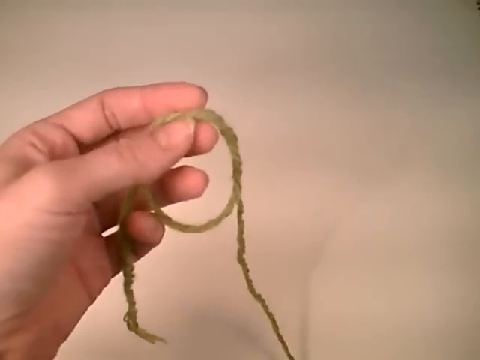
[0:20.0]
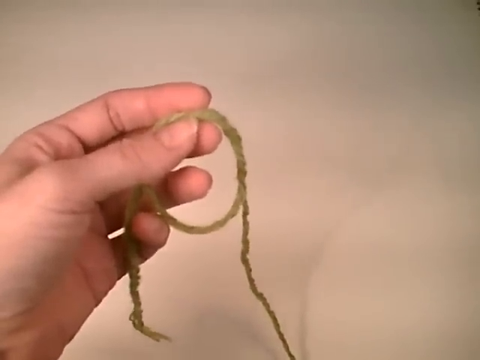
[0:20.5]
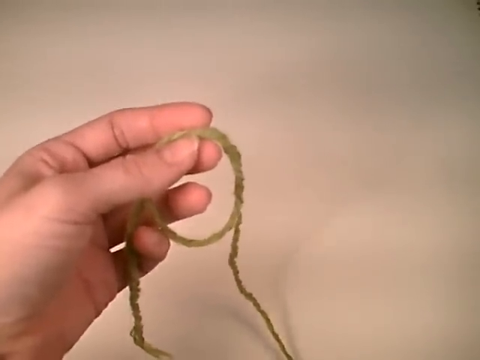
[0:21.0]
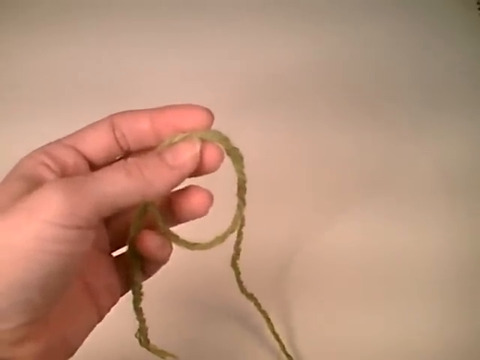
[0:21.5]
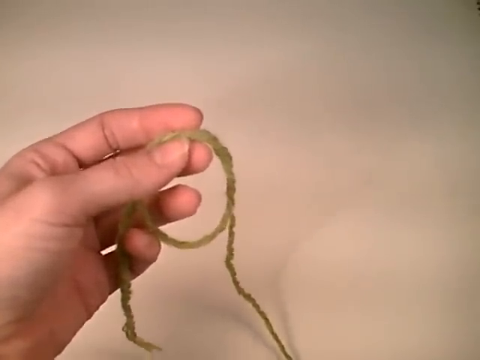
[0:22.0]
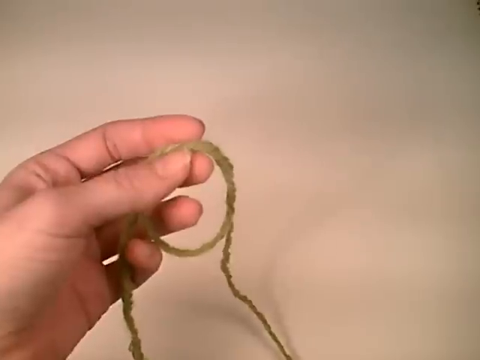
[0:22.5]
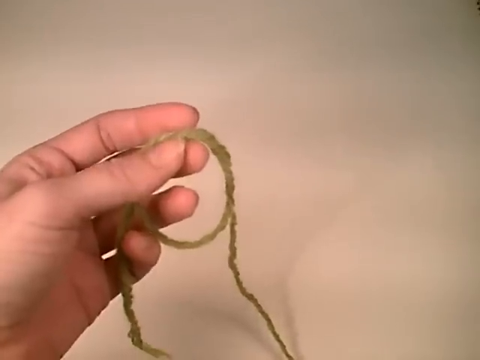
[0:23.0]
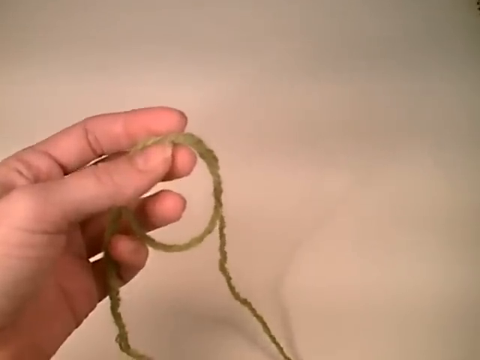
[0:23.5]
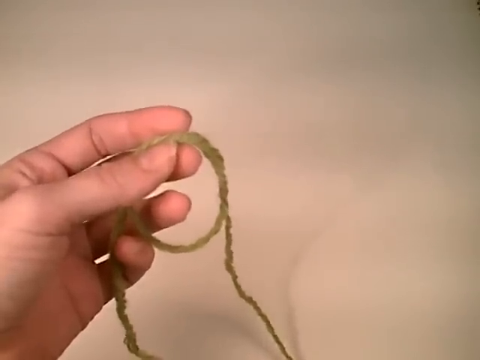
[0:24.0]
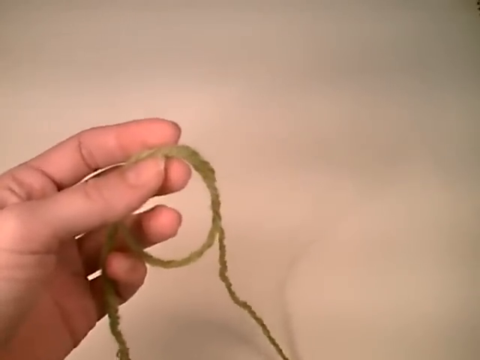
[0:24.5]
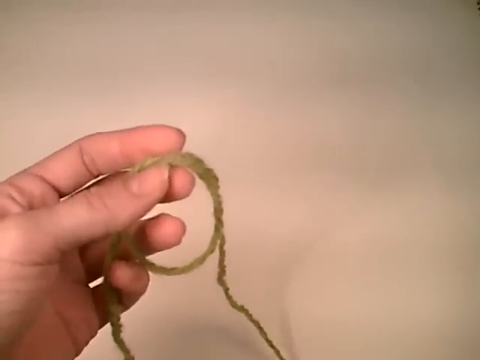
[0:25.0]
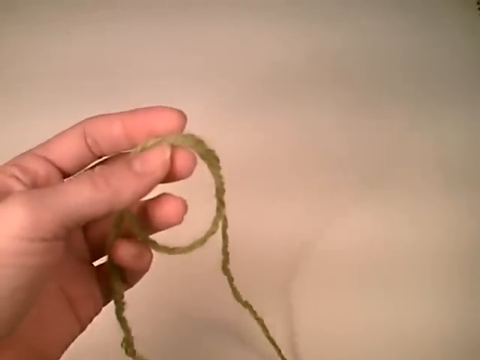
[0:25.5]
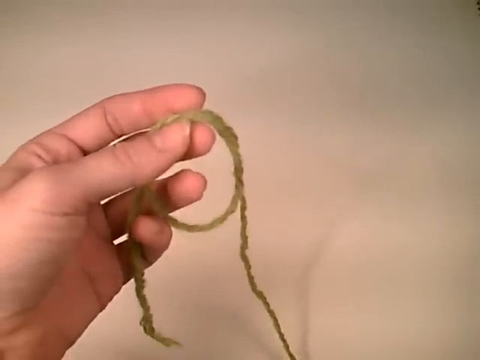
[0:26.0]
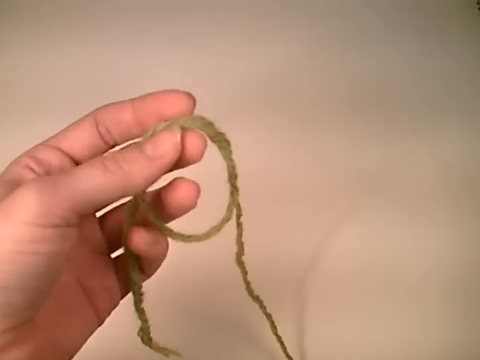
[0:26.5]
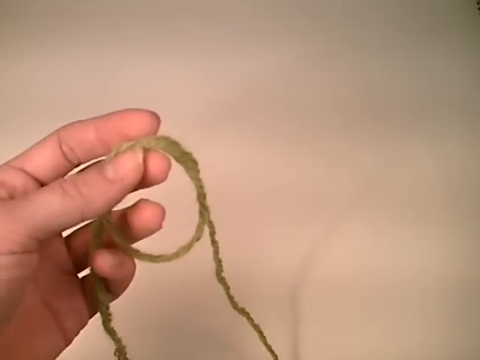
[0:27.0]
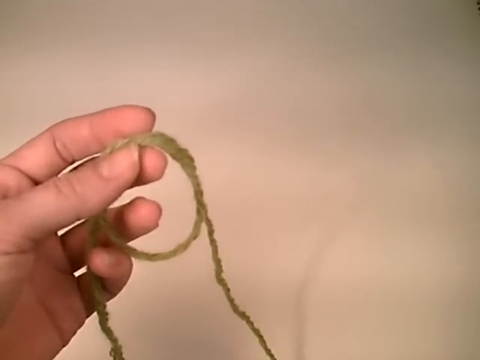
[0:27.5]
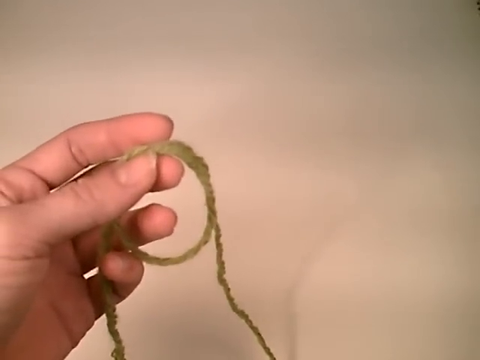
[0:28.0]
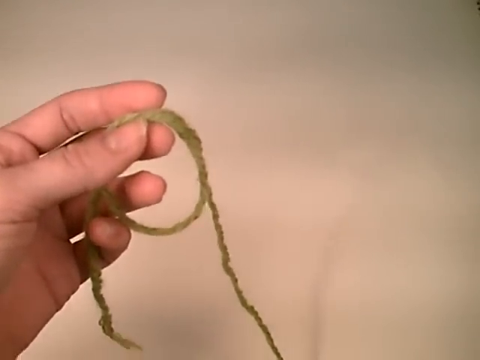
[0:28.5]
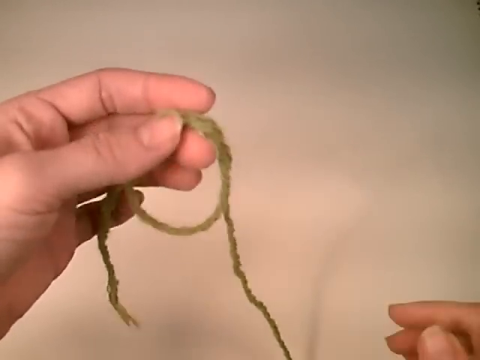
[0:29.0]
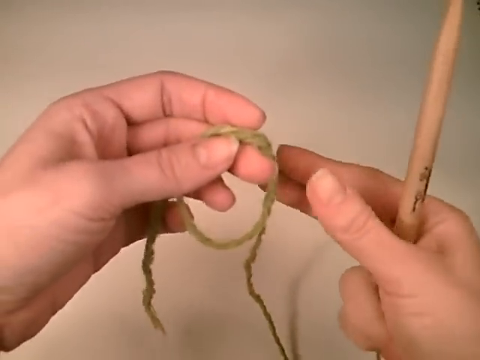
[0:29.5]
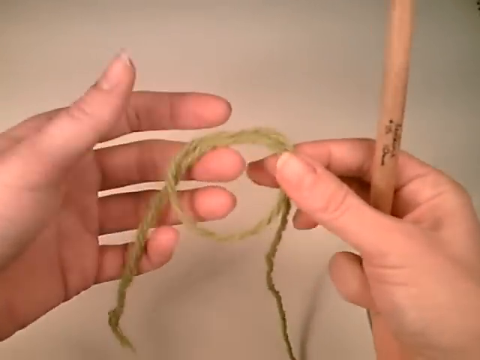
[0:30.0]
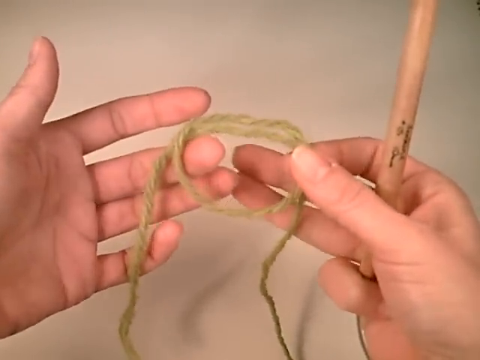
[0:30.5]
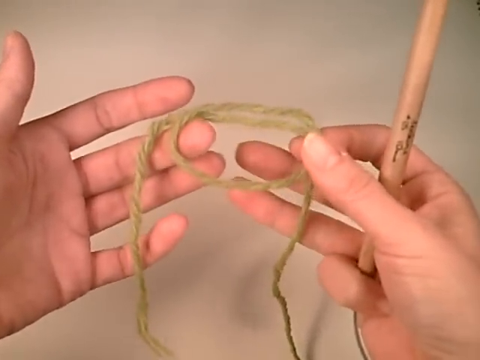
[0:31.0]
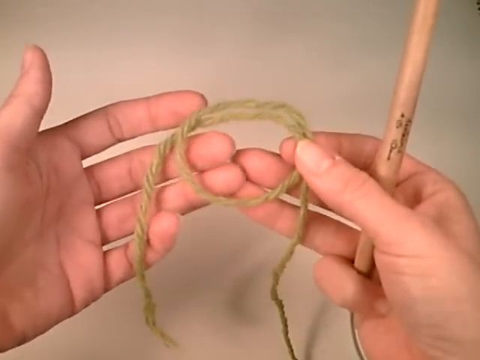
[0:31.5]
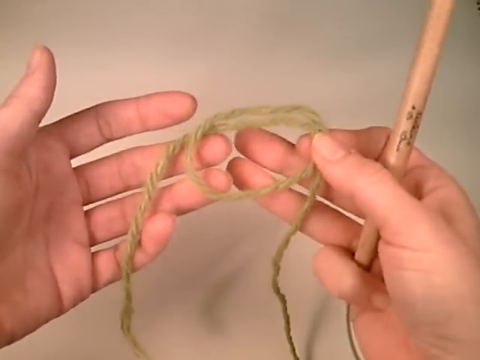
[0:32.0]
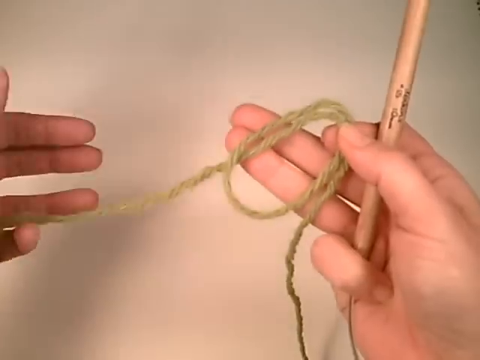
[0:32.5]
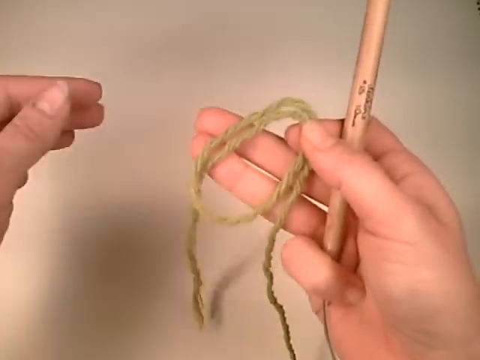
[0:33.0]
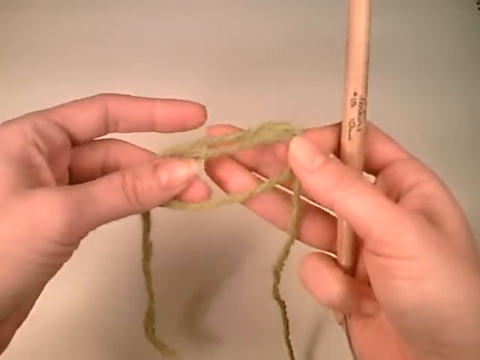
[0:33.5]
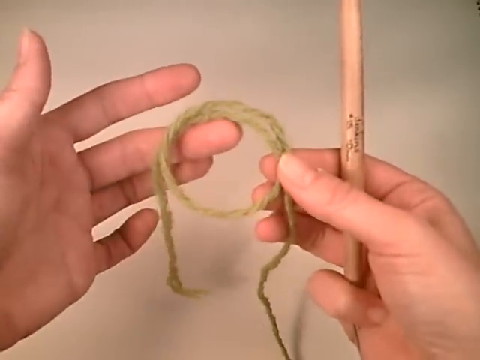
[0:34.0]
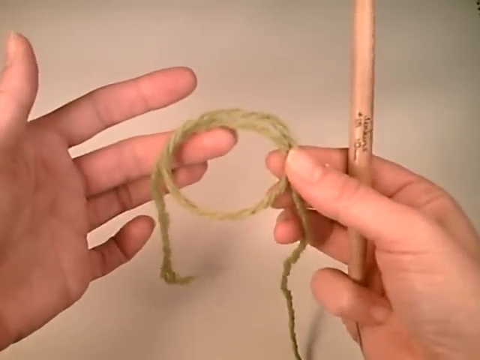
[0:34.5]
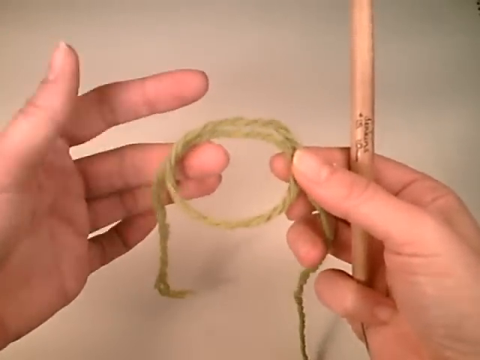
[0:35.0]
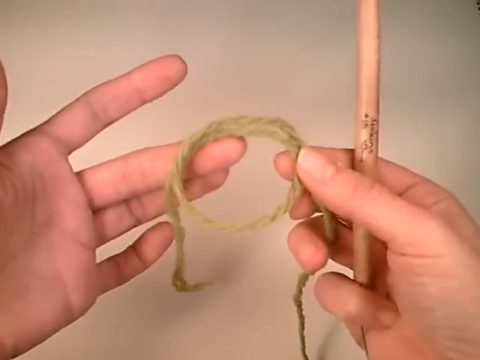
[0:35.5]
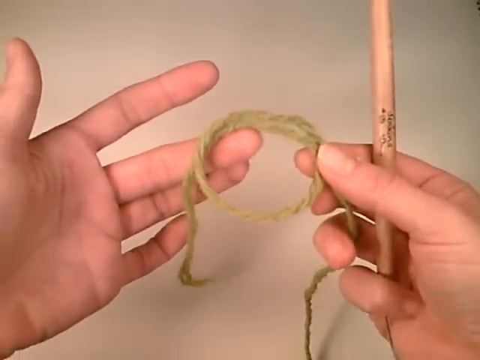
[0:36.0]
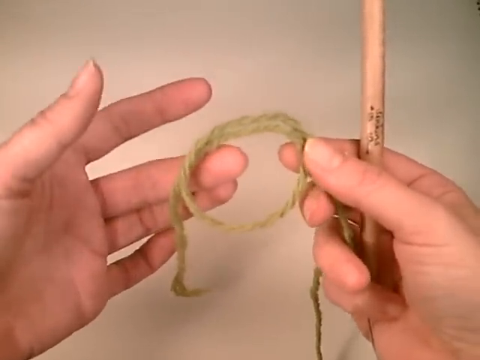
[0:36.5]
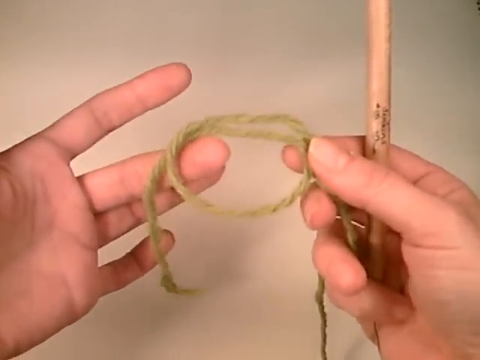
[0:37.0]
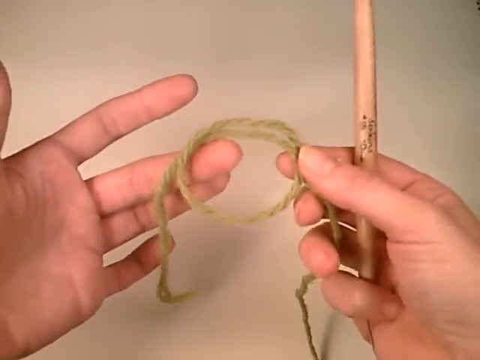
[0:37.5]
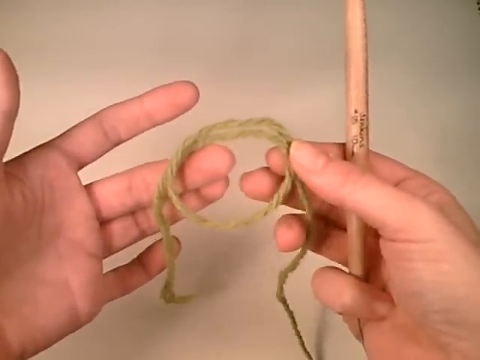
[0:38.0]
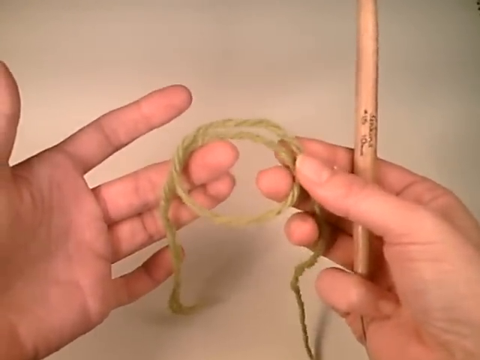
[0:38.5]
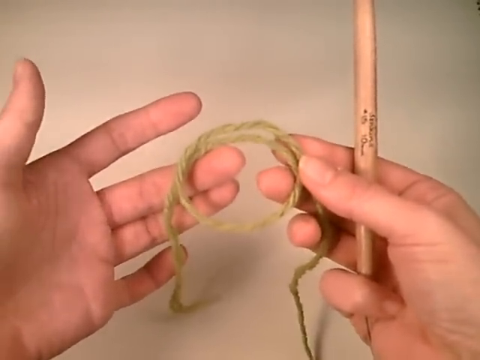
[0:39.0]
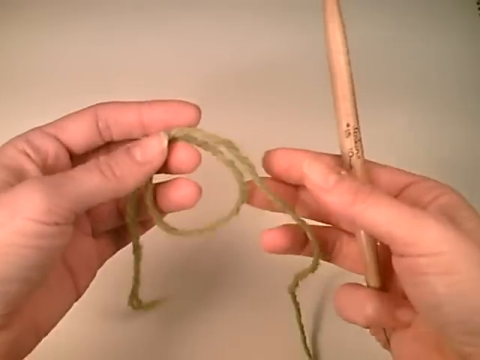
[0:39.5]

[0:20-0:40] A left hand holds a piece of thread against a brownish background, with some shadows of the hand reflected on the background. The right hand then appears, holding a wooden knitting needle. The person seems to be a white woman with a bit of nail on both thumbs. The thread has a circular knot that appears to have been intertwined, as part of the circle is doubled while the other part is single. Two strands of the same thread extend from the circular knot. The video seems to be about how to tie a knot or how to knit. There is no text, and the video is simple and minimalist.